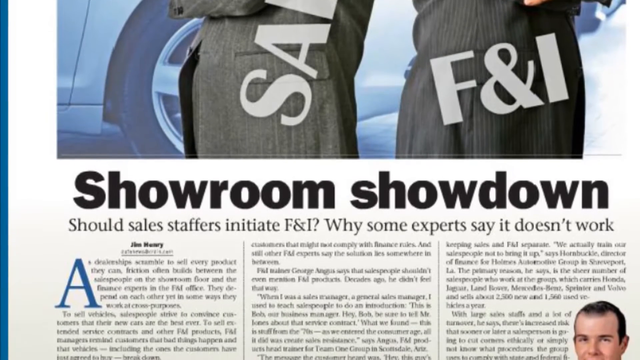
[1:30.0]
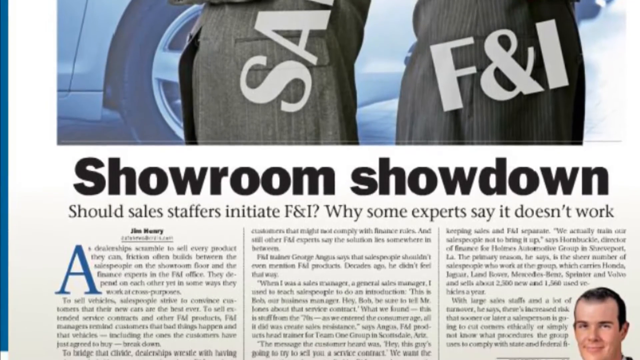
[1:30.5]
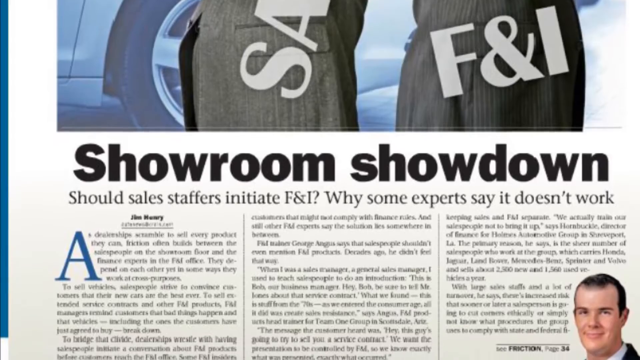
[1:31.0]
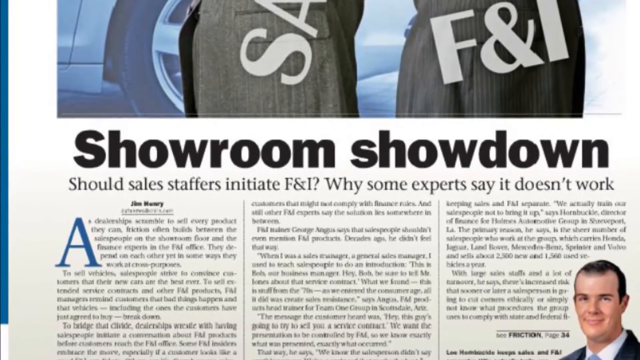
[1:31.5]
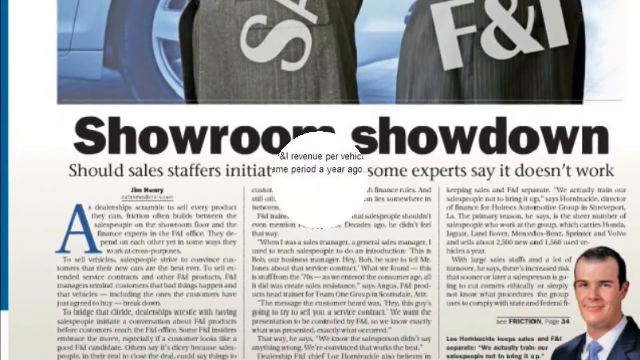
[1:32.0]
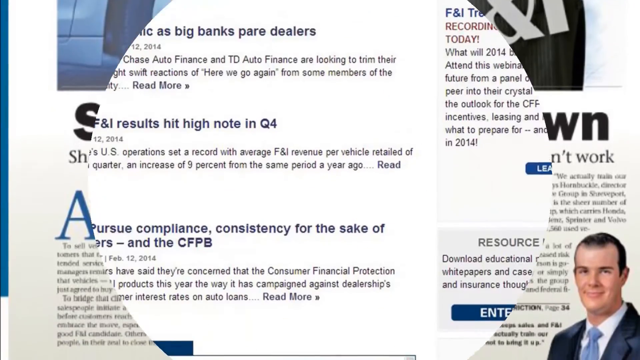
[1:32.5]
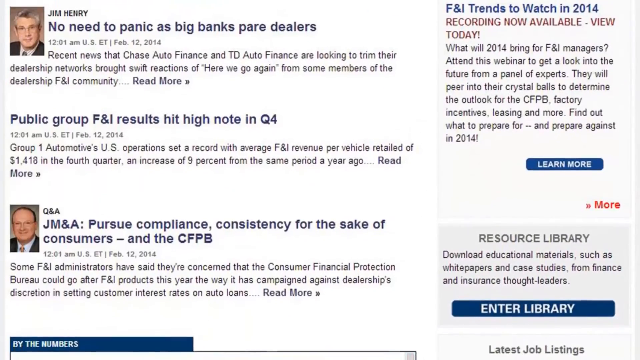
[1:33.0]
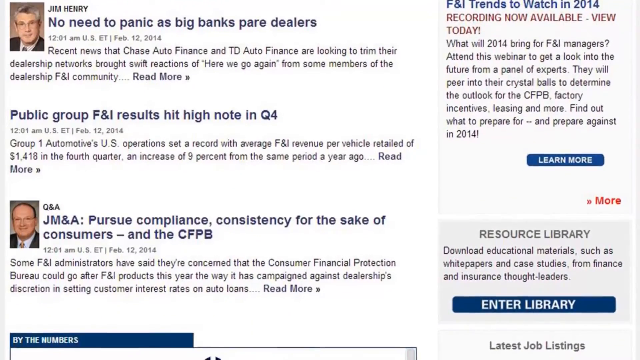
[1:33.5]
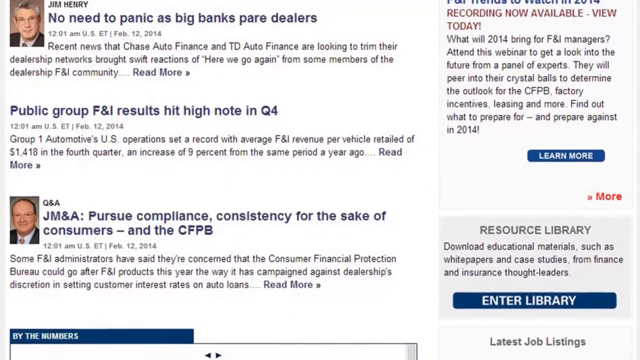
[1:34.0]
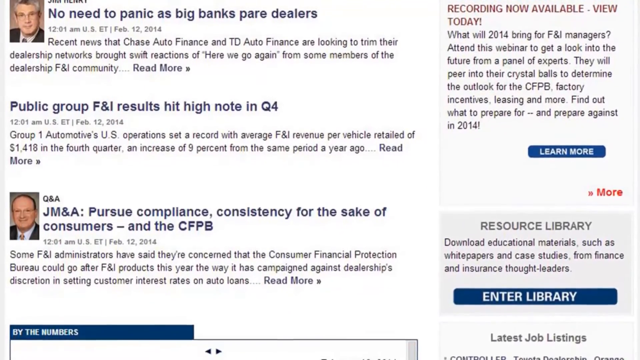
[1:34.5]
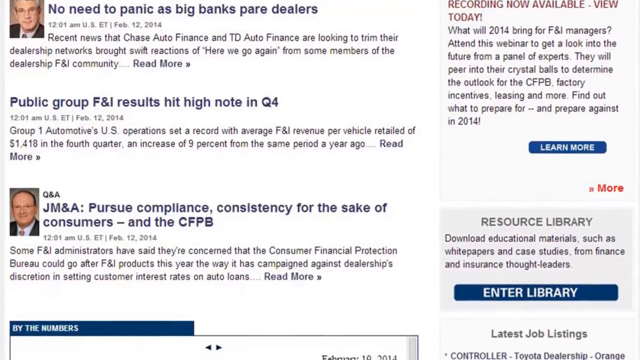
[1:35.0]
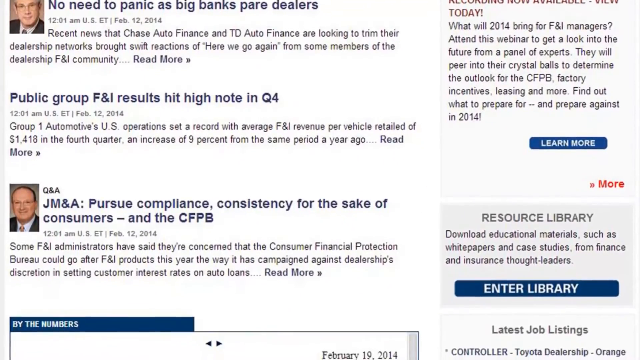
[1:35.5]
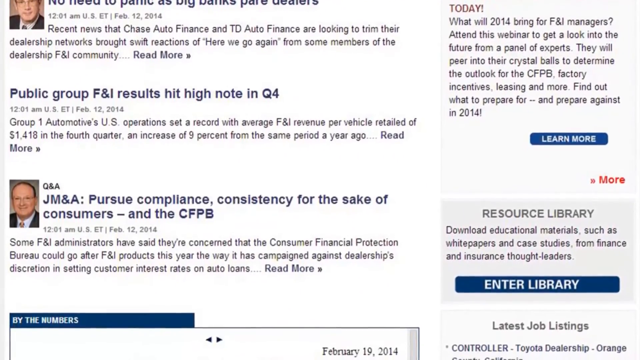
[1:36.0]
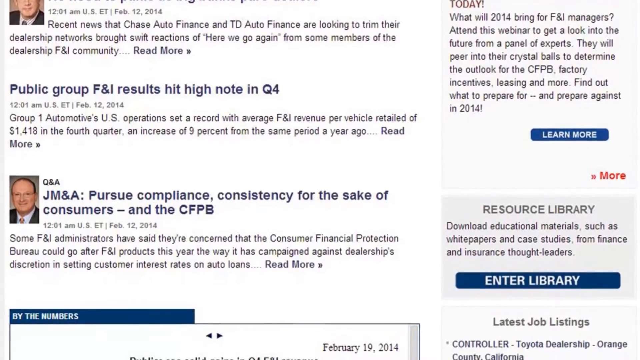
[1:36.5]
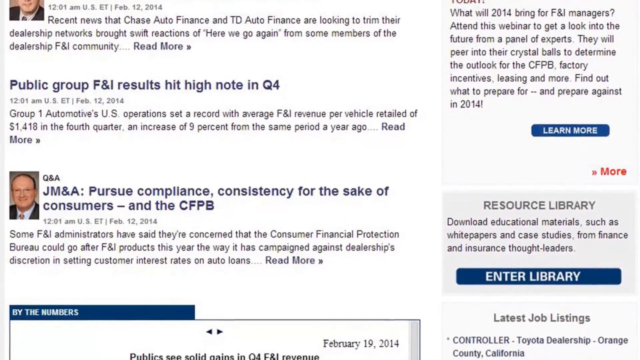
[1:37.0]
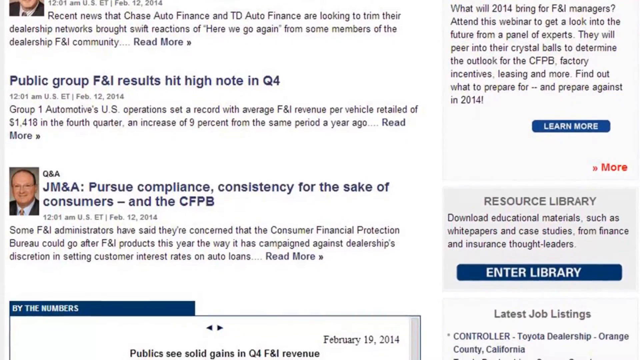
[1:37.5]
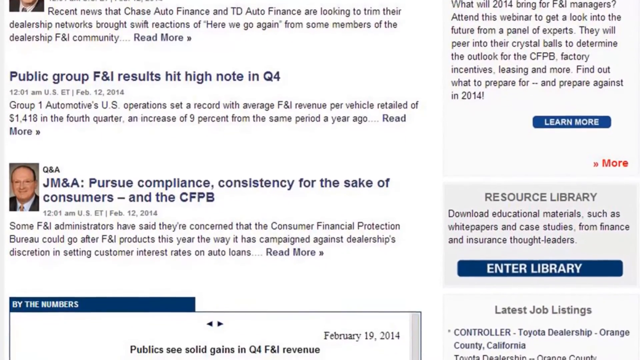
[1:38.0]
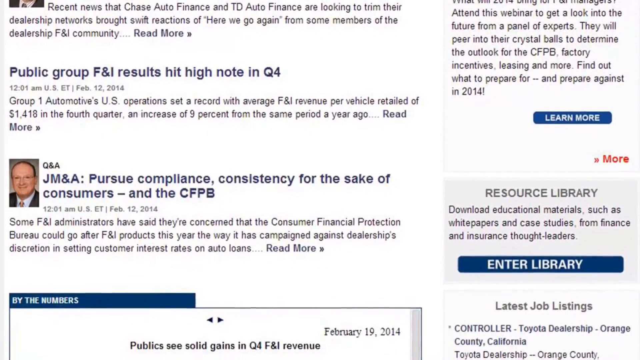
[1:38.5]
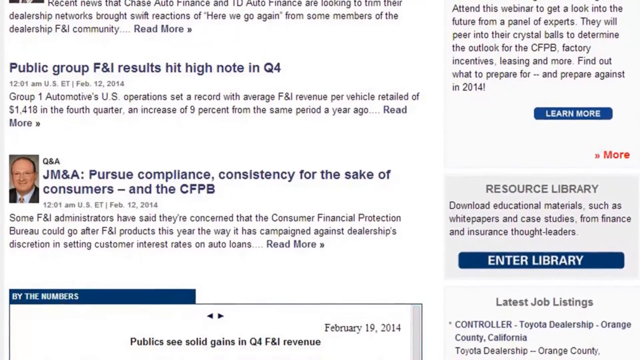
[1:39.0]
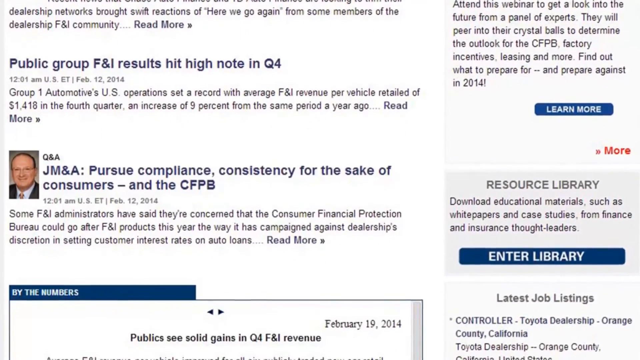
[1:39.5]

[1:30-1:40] A section of the Access F&I website appears to be zoomed in on the subtitle "Should sales staffers initiate F&I? Why some experts say it doesn't work." The video scrolls down the article a ways and then returns to an article listings page, where one Q&A article reads "JM&A: pursue compliance consistency for the sake of consumers and the CFPB."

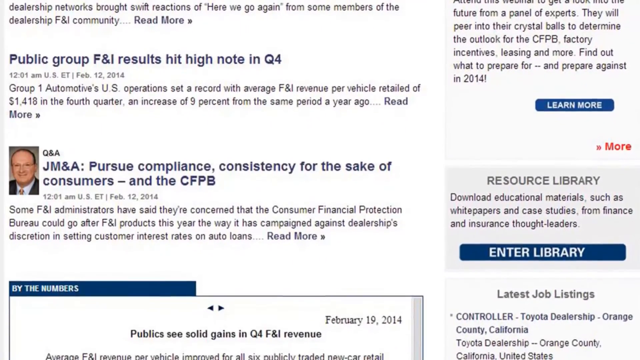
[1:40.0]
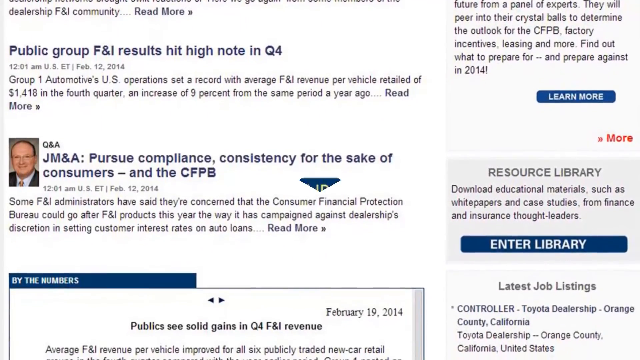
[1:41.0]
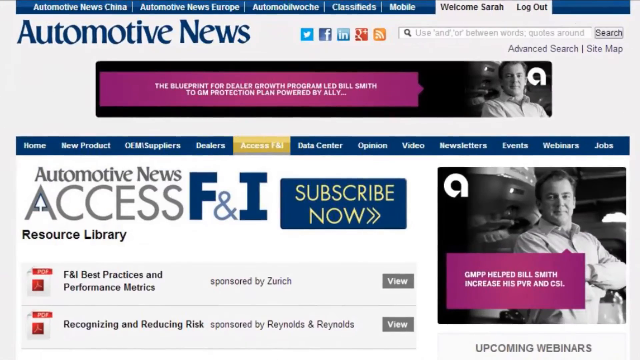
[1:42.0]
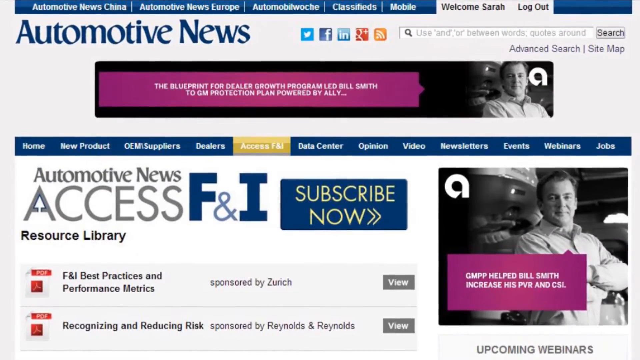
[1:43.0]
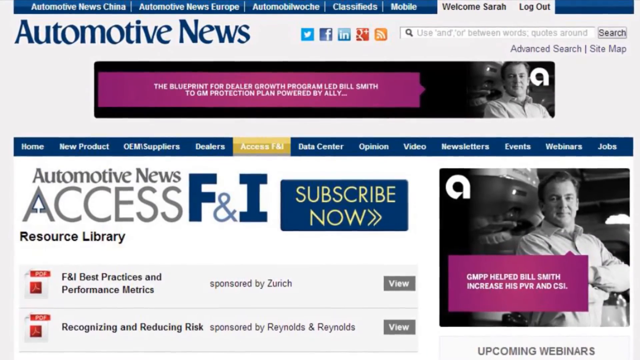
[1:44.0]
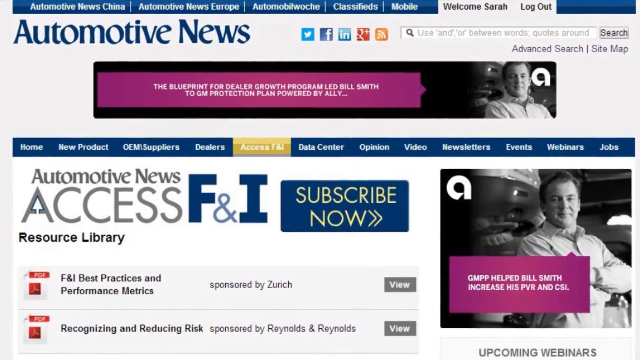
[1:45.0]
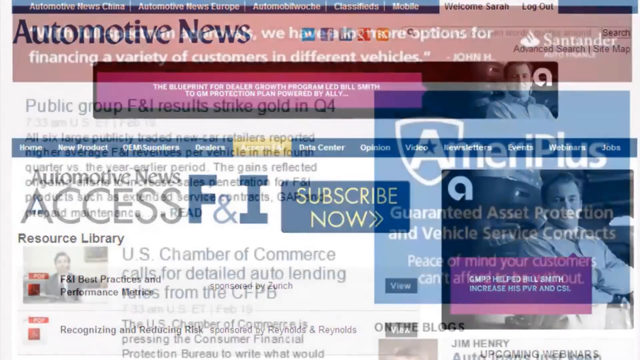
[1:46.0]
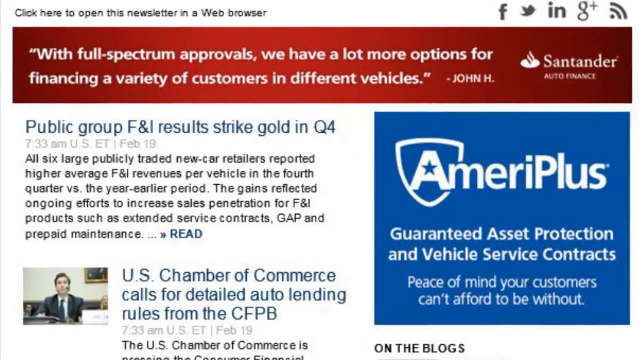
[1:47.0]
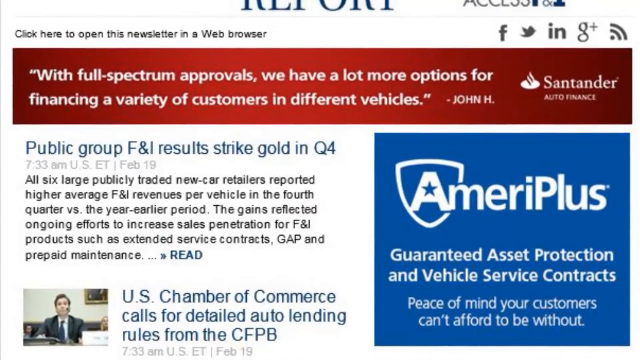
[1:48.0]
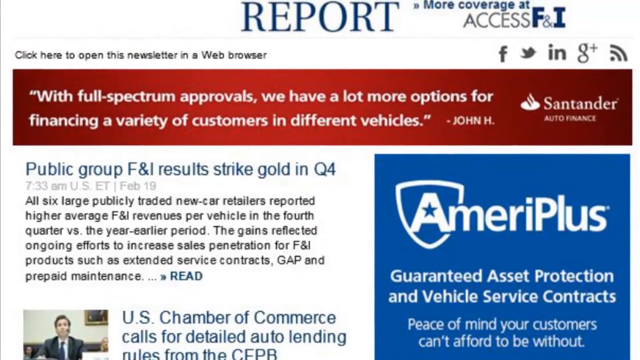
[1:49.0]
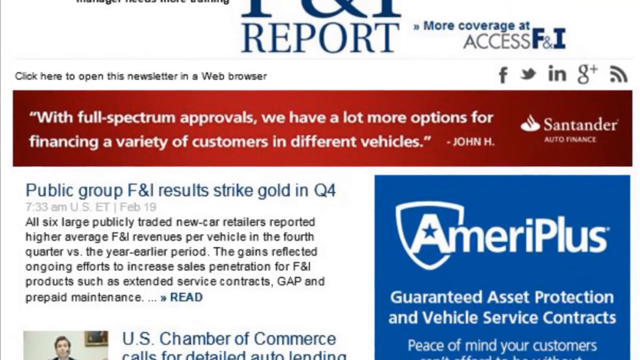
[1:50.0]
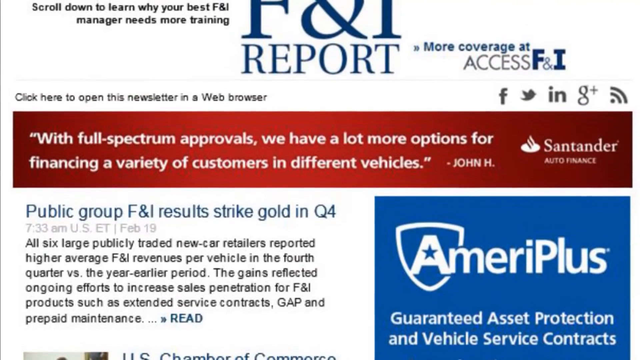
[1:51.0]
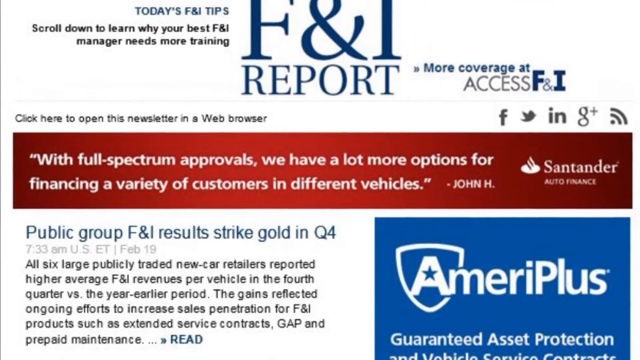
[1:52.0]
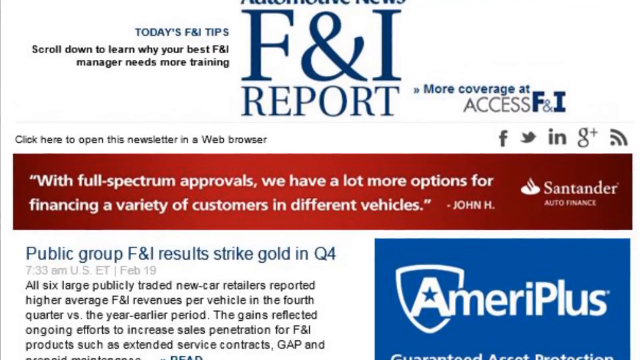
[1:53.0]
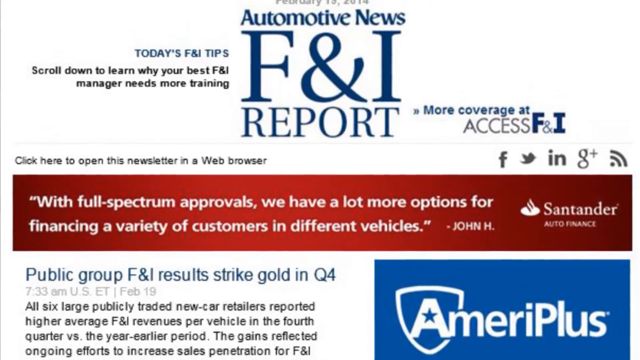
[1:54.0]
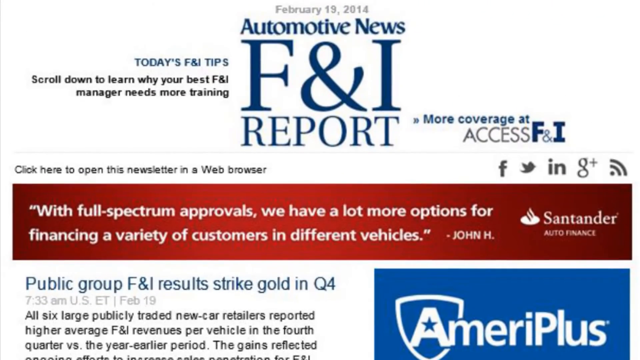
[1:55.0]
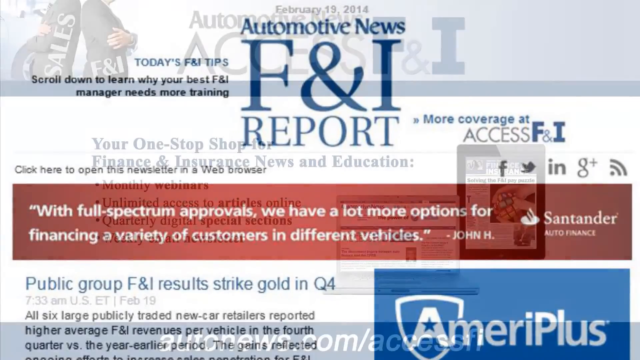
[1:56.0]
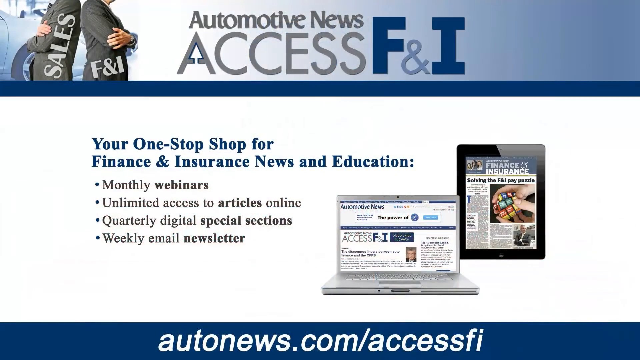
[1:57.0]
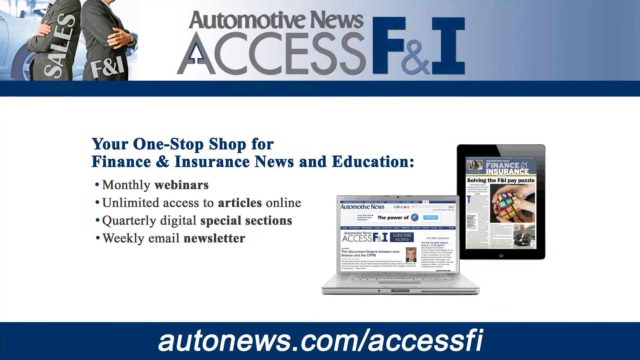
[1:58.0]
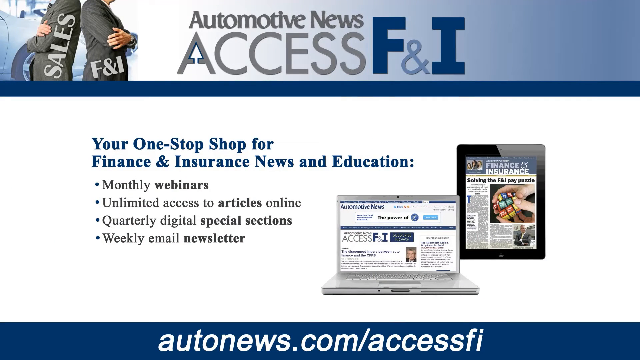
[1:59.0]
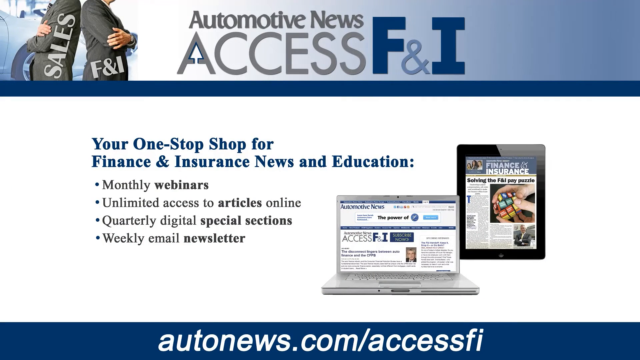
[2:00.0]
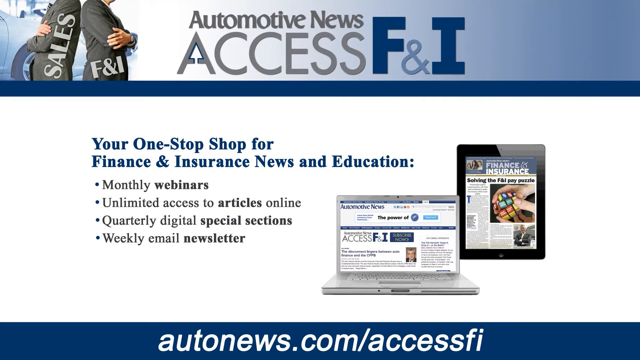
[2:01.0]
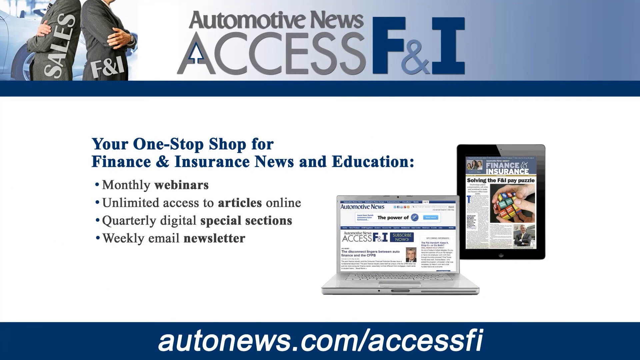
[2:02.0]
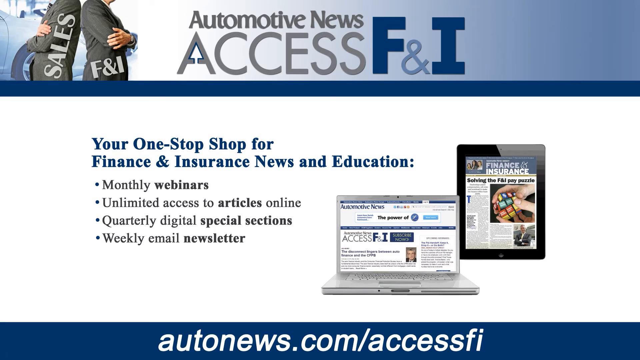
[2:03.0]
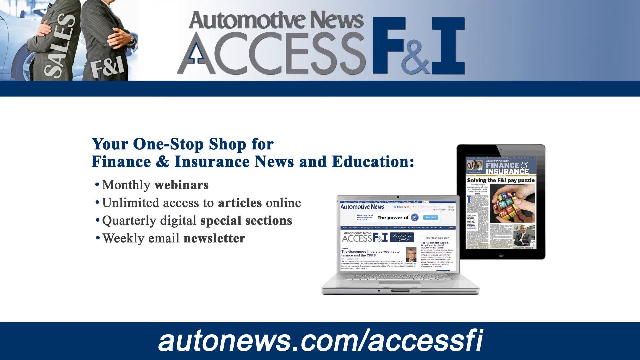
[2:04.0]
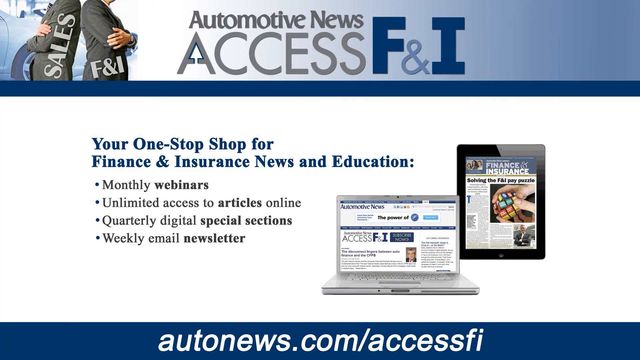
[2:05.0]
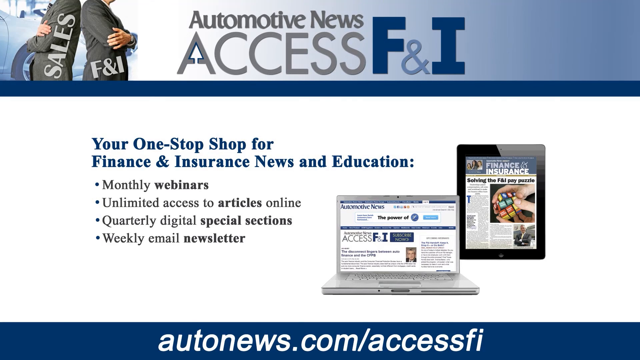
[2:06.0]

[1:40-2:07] A section of an automotive industry webpage lists articles and various other resources. The page has a mostly white background with light gray accents; many article titles are in dark navy blue and the descriptive text is in black. The page scrolls down a ways, then switches to a section of the website titled "Automotive News" and then to a section titled "The F&I report," which scrolls up. Next comes a banner image reading "Automotive News Access F&I" on a light blue banner, with "Automotive News Access" in medium gray and "F&I" in dark navy blue with a lighter blue ampersand between the letters. The advertisement states "your one-stop shop for finance and insurance news and education," followed by four bullet points: "monthly webinars," "unlimited access to articles online," "quarterly digital special sections," and "weekly email newsletters."